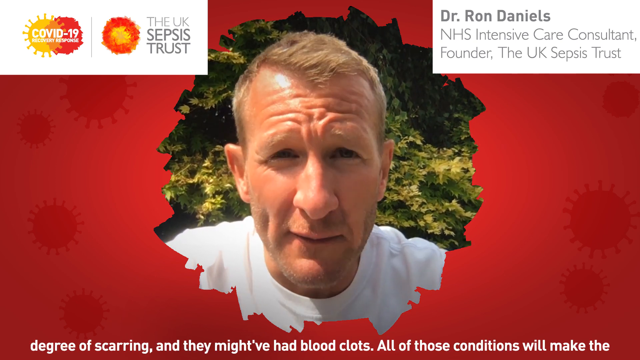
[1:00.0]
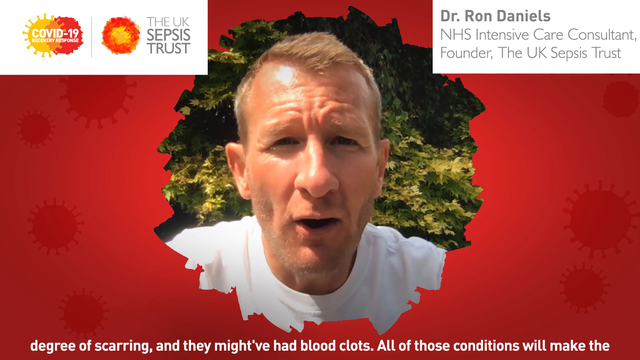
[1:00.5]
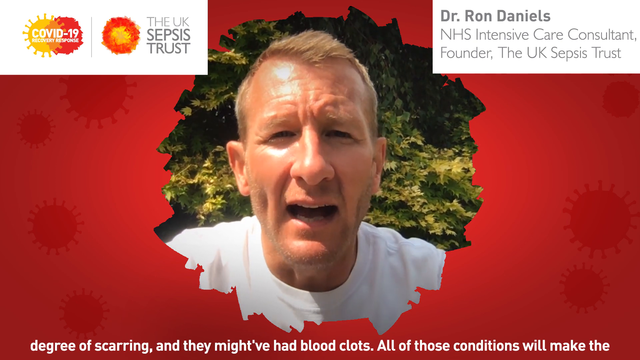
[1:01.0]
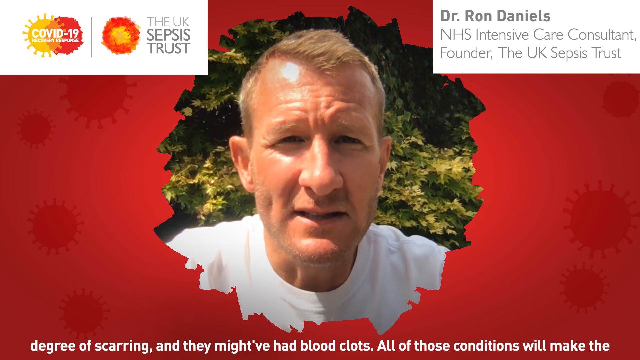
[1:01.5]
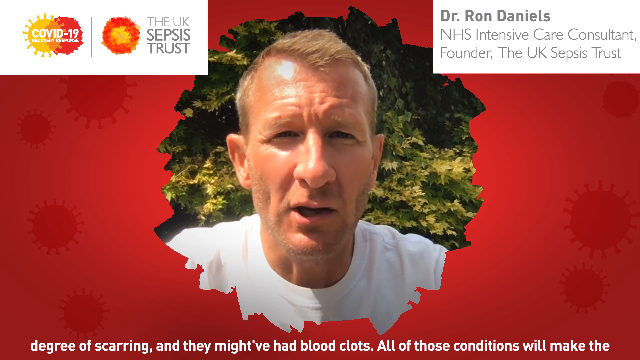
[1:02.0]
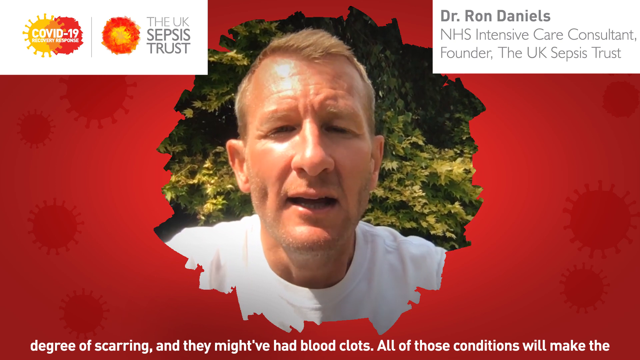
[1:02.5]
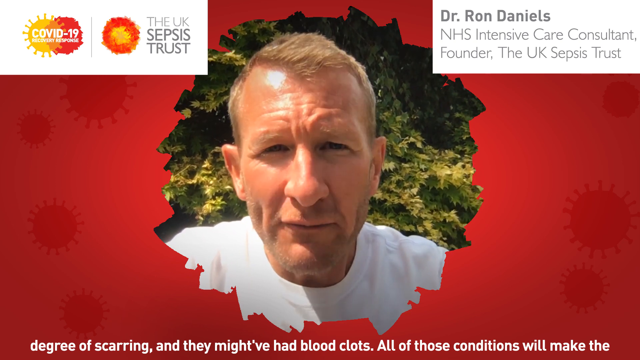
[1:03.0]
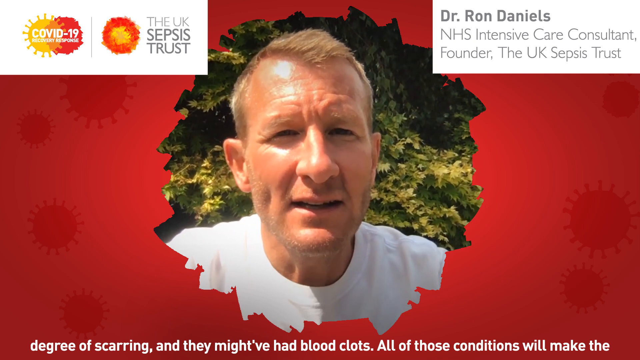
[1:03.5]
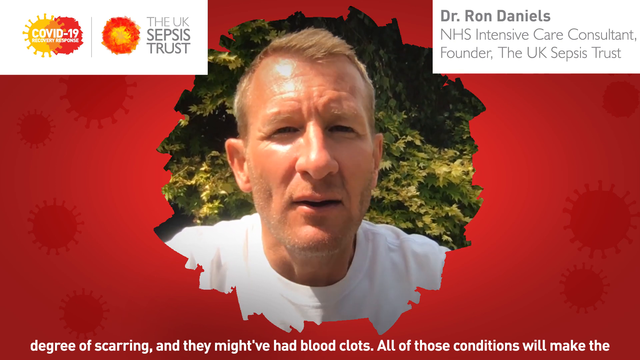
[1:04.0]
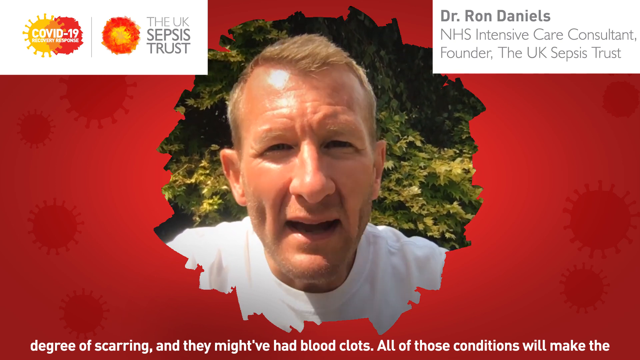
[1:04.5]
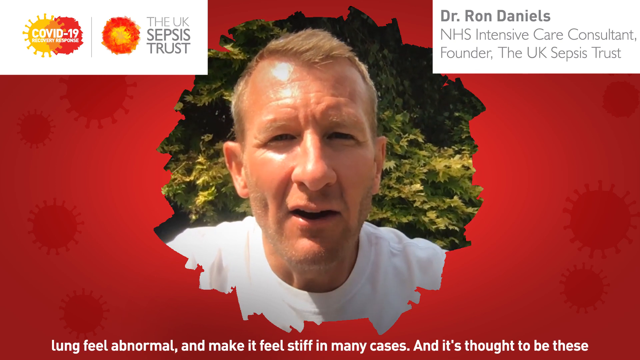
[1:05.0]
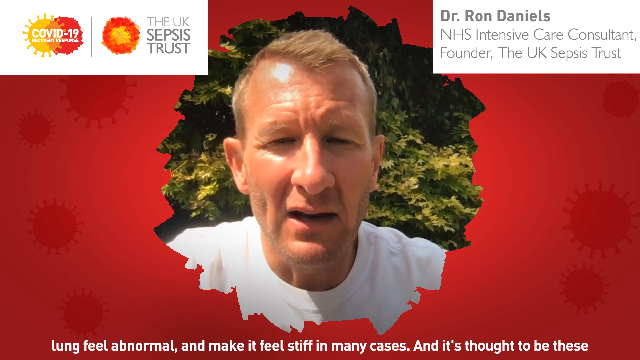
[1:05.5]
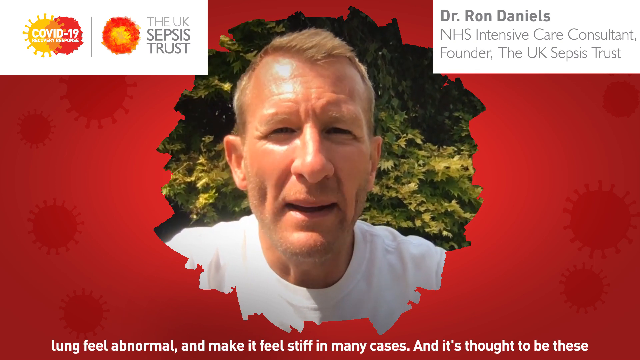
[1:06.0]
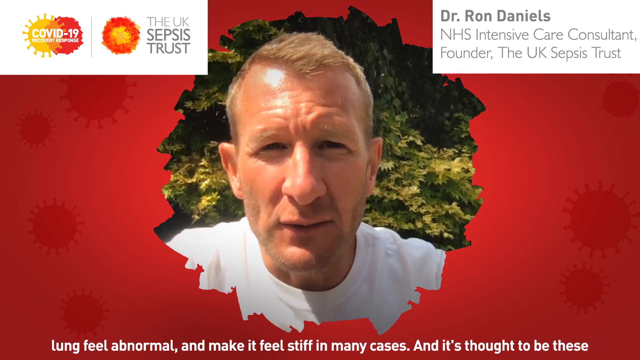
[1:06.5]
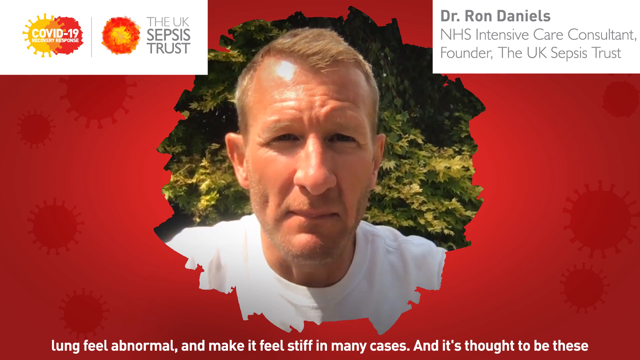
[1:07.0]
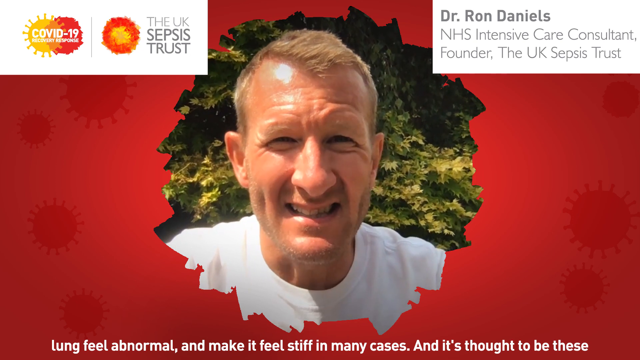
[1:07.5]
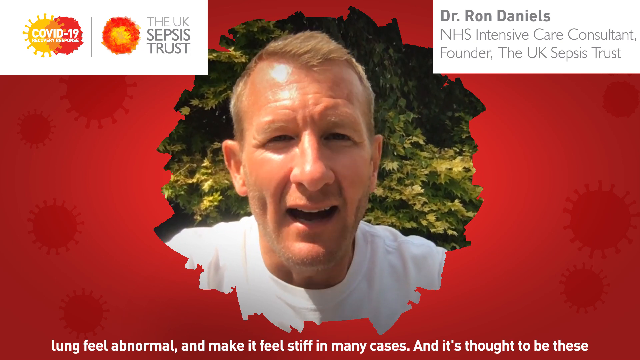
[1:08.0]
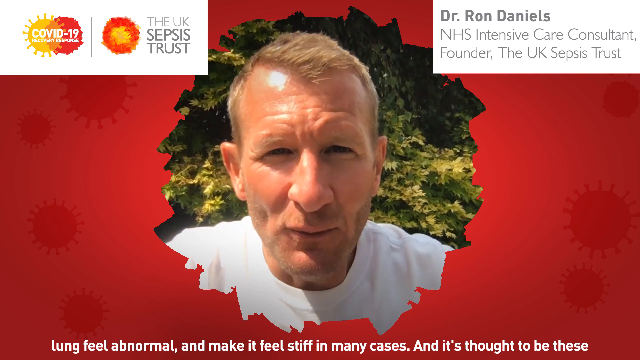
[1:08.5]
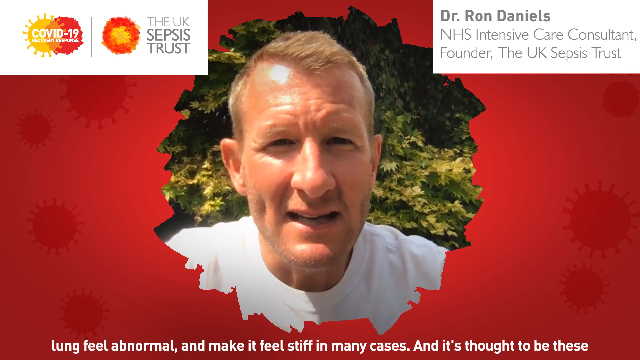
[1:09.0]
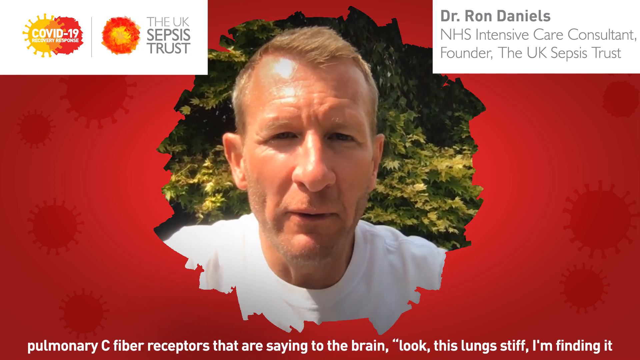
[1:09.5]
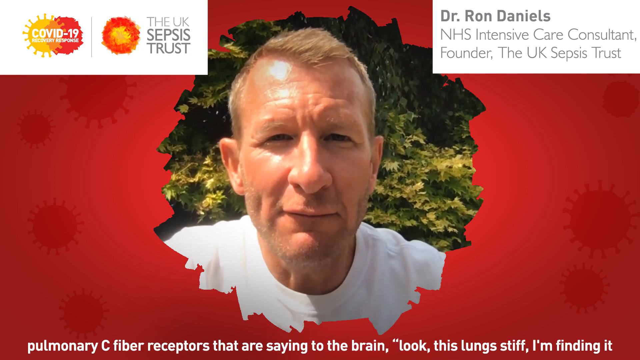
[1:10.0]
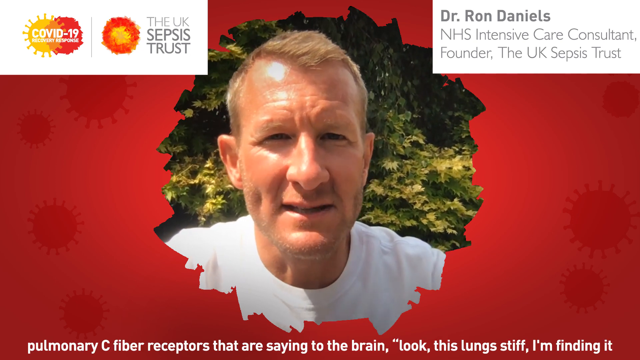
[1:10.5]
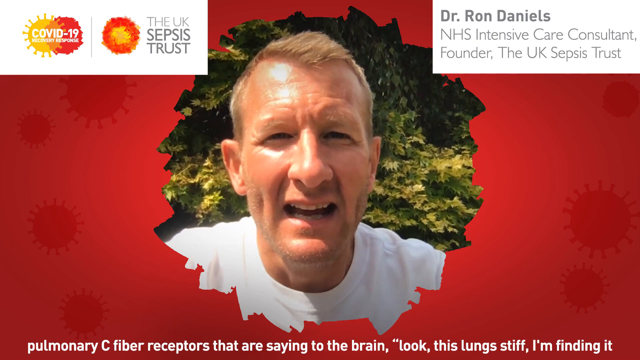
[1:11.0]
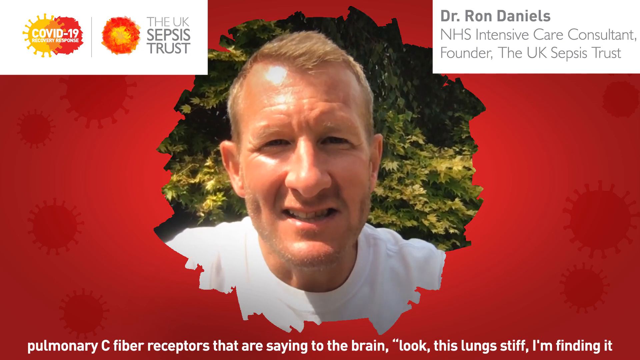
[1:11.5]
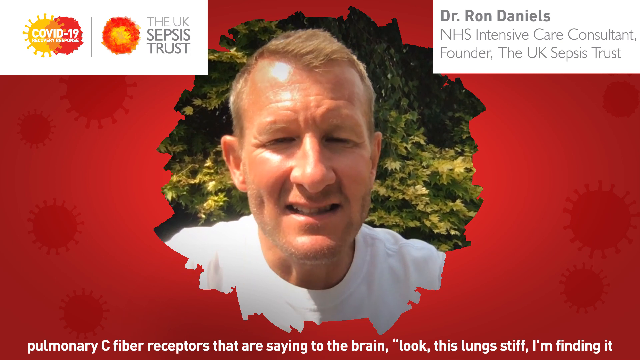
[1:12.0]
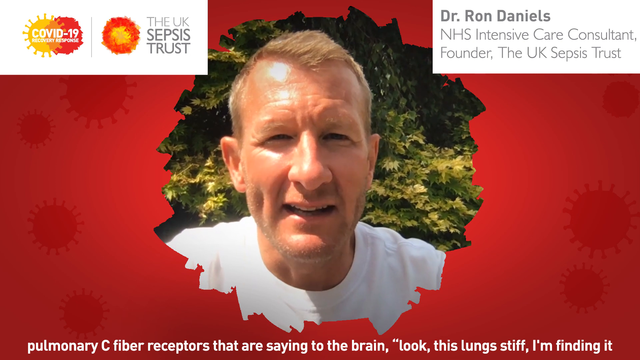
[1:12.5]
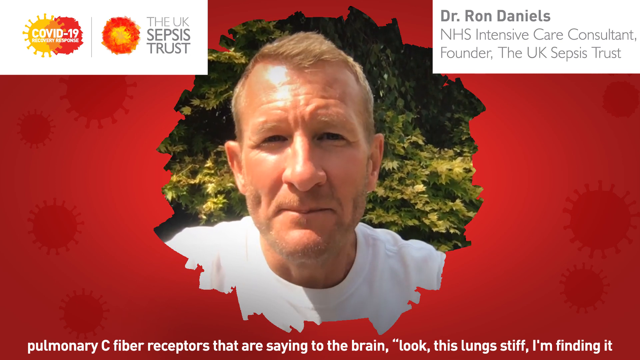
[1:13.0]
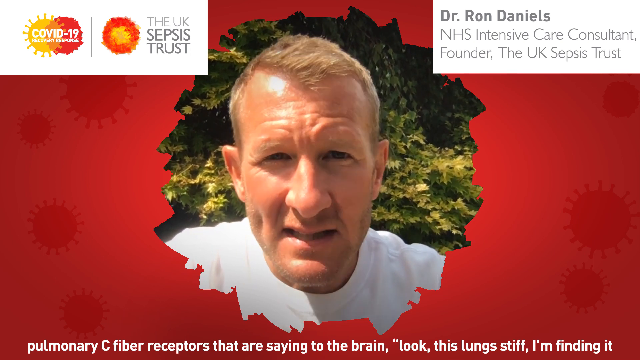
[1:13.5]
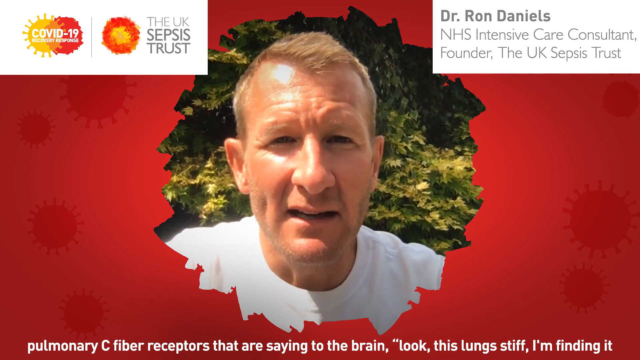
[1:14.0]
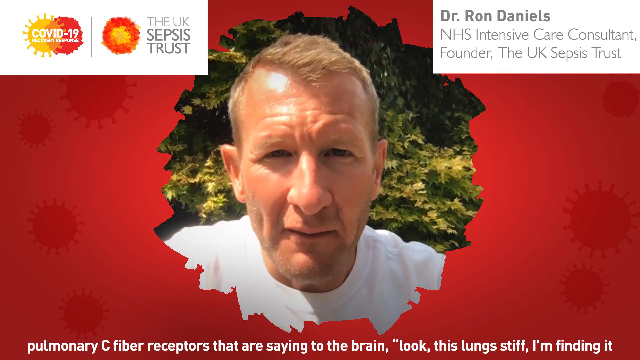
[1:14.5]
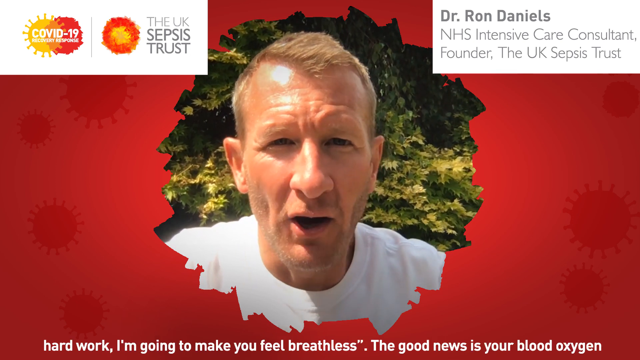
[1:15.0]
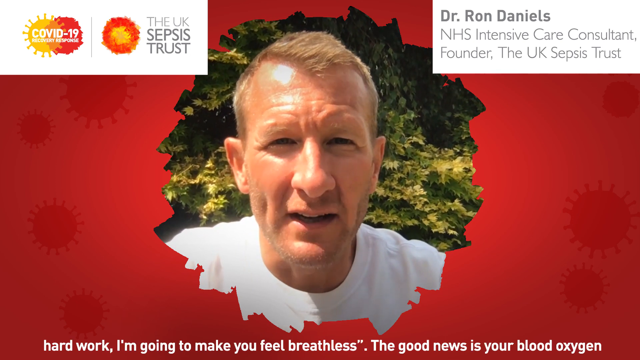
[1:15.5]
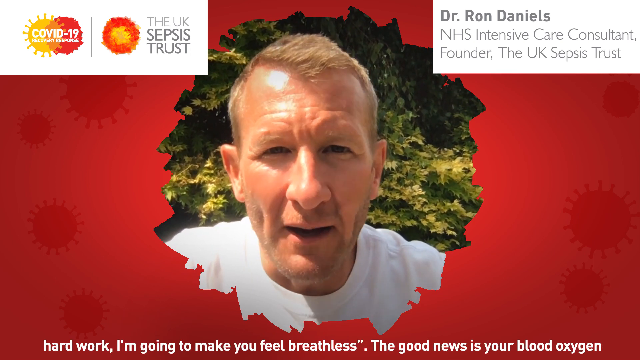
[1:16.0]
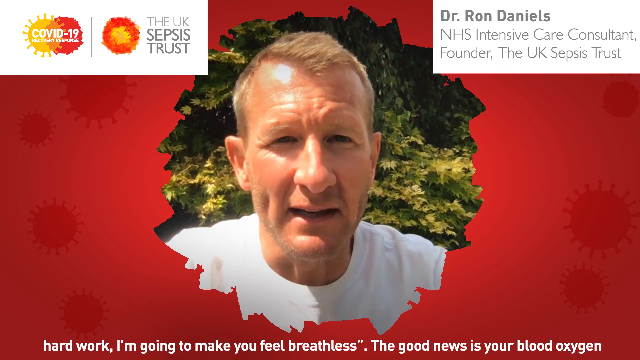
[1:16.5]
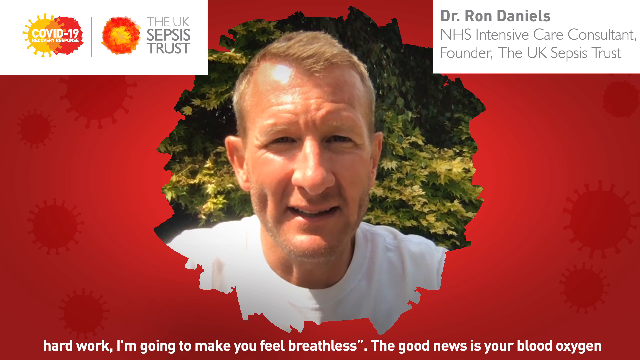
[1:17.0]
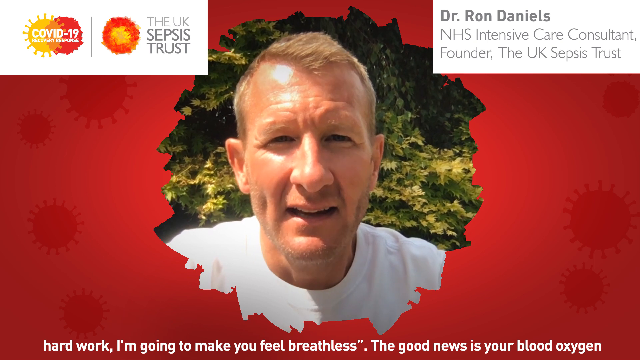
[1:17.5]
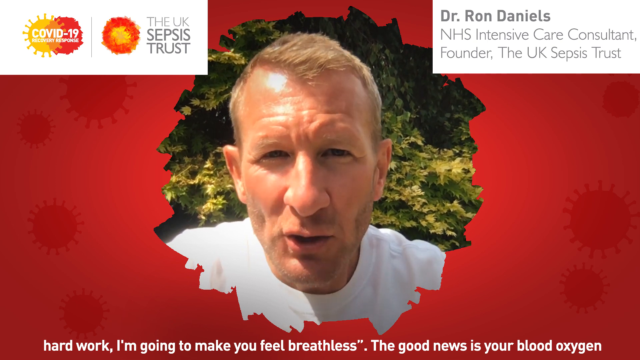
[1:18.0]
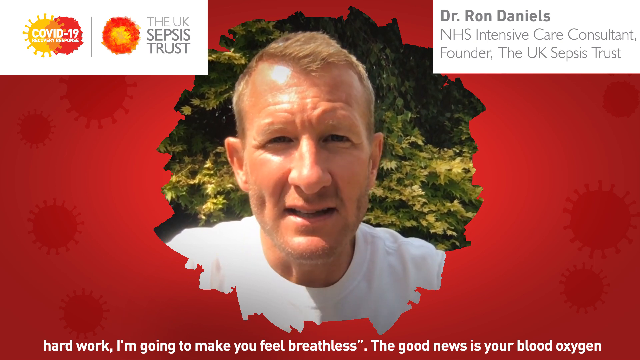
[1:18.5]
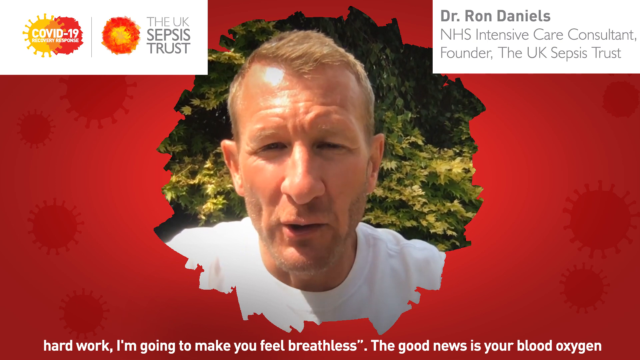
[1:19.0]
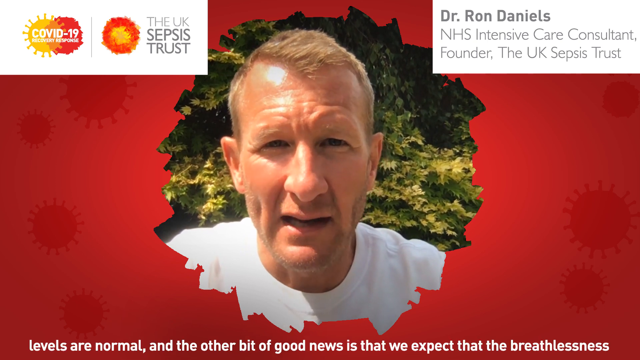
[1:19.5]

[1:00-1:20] The same face is shown, with Dr. Ron Daniels identified as the NHS Intensive Care Consultant, Founder of the UK Sepsis Trust. The same COVID-19 Recovery Response logo is at the top left, and the UK Sepsis Trust logo is also there. He talks in a fairly excited, very focused manner. He is a normally clean-shaven man, though some beard growth is visible on his face.